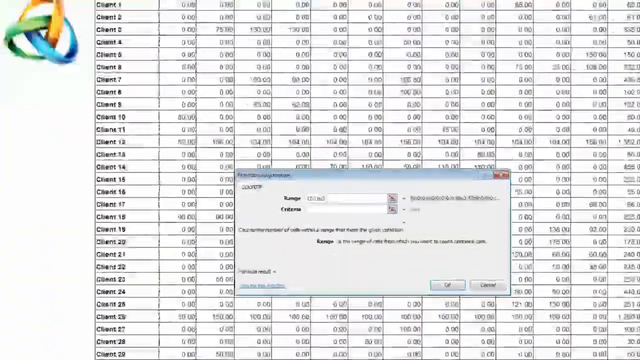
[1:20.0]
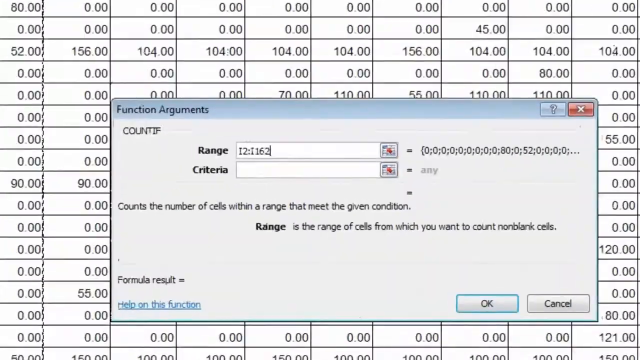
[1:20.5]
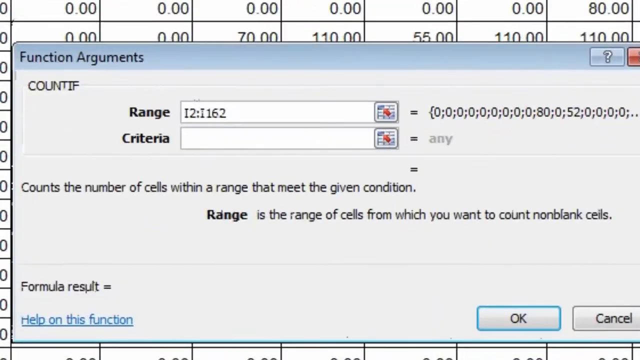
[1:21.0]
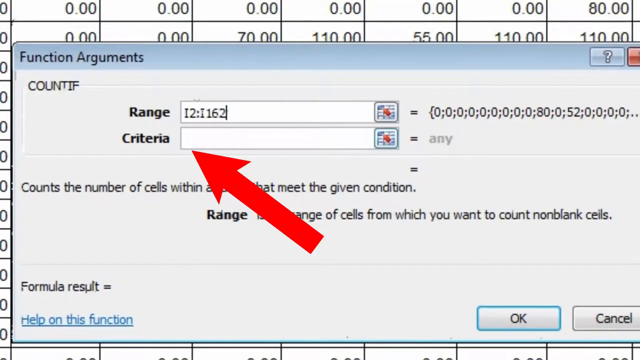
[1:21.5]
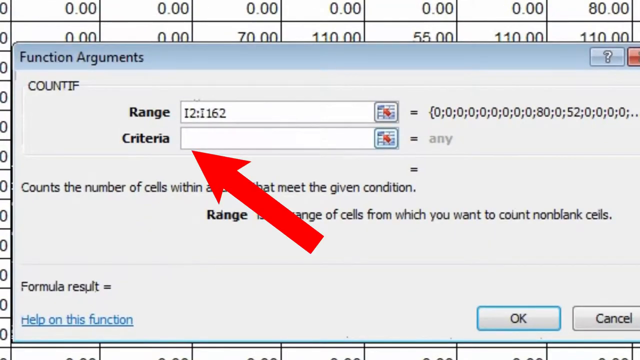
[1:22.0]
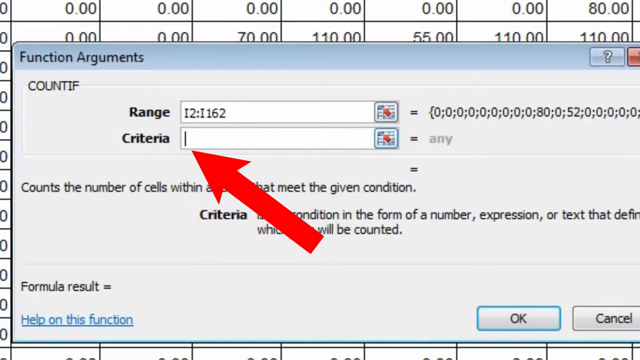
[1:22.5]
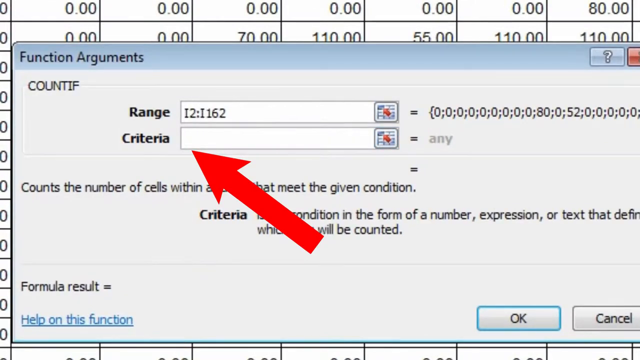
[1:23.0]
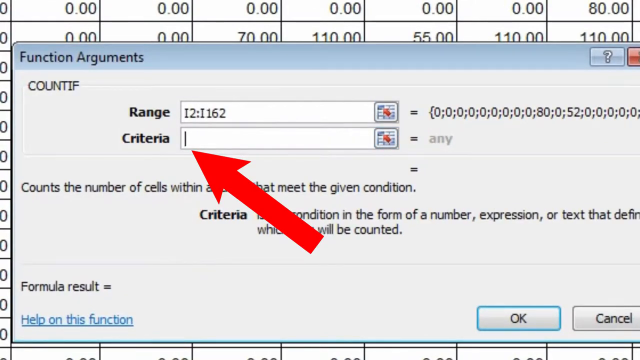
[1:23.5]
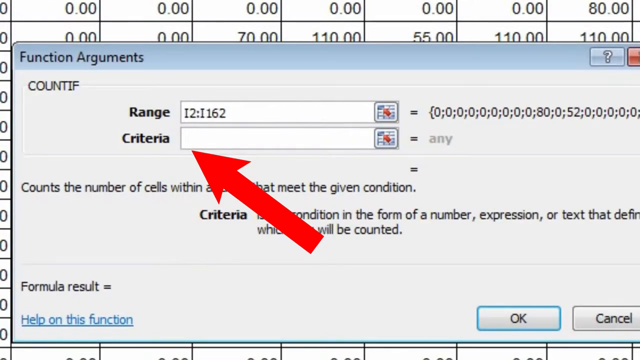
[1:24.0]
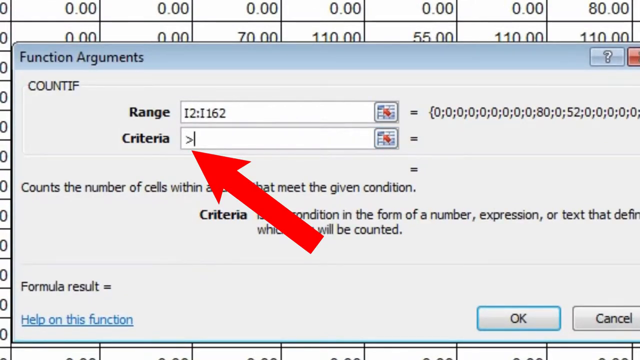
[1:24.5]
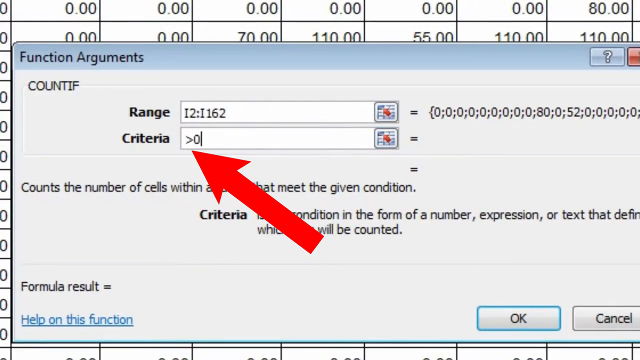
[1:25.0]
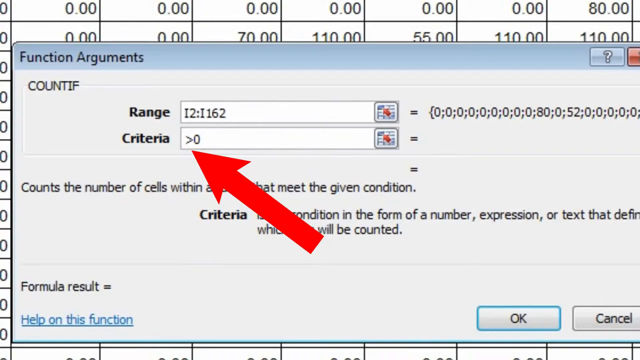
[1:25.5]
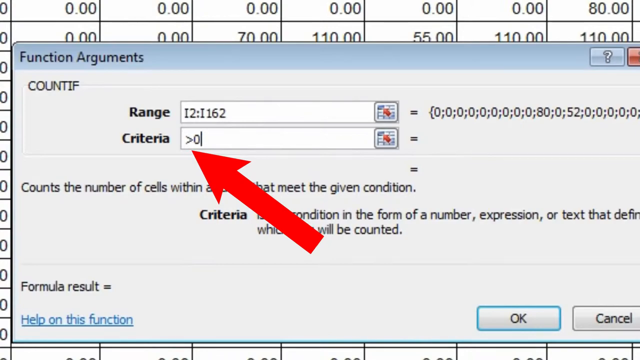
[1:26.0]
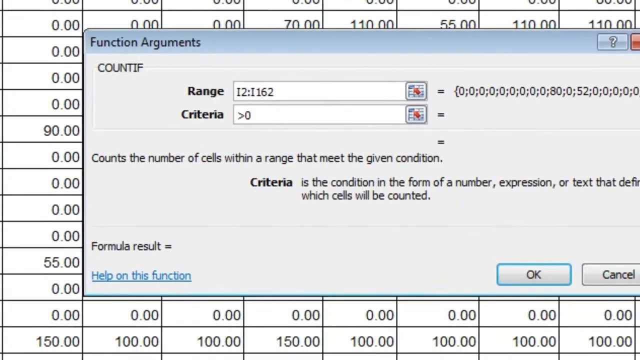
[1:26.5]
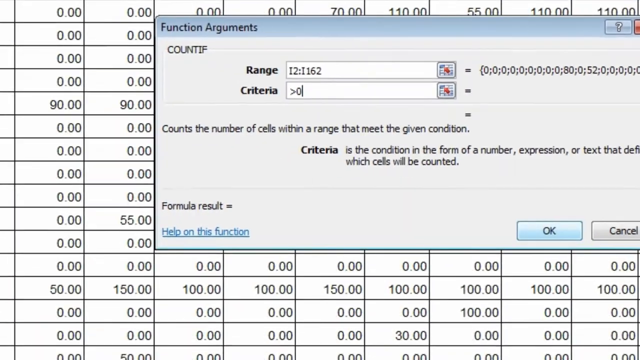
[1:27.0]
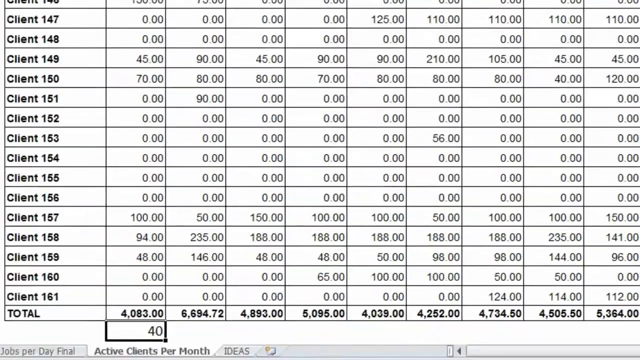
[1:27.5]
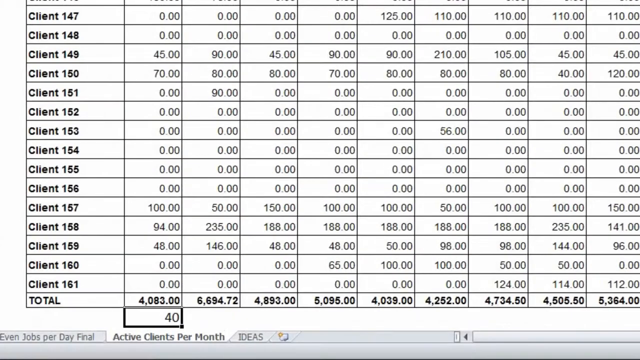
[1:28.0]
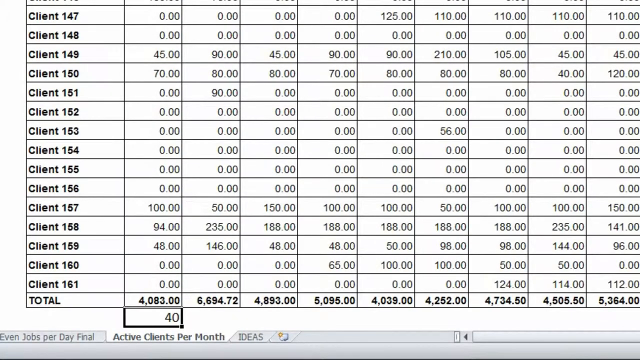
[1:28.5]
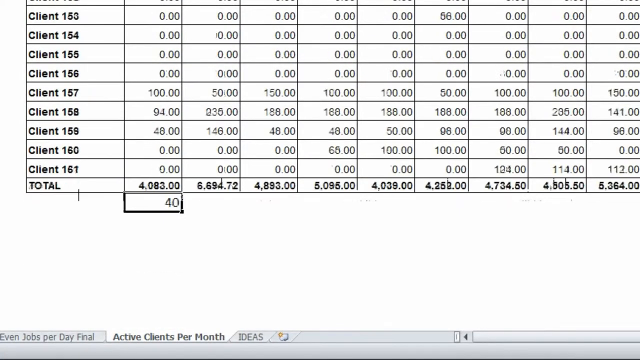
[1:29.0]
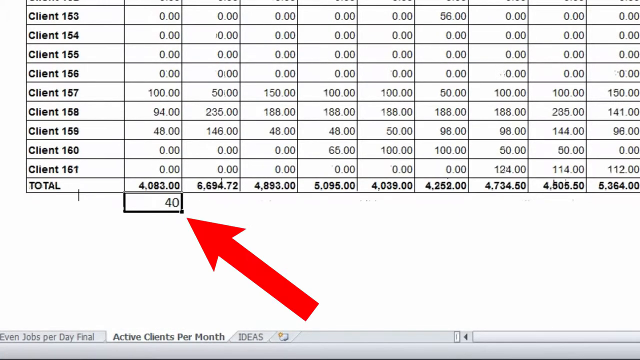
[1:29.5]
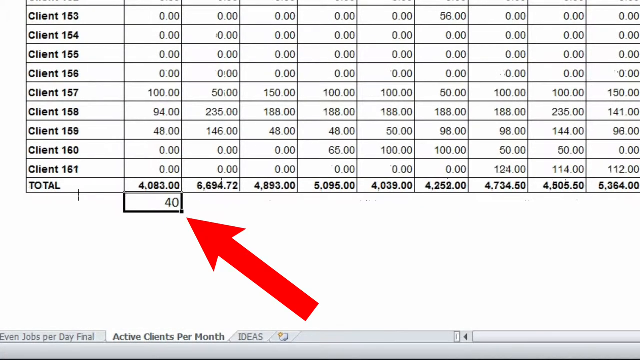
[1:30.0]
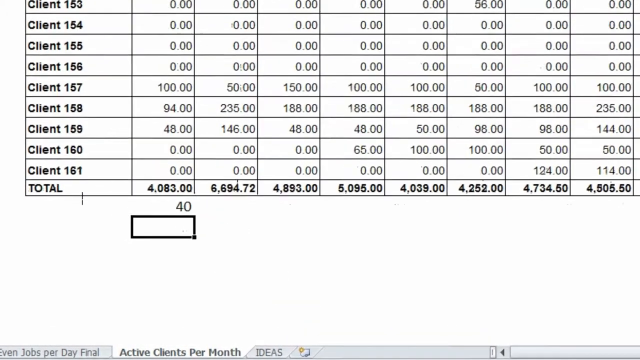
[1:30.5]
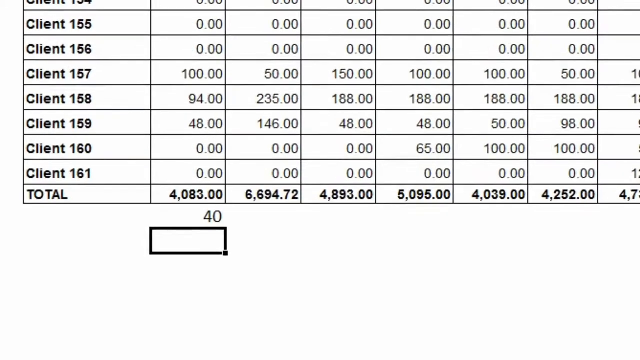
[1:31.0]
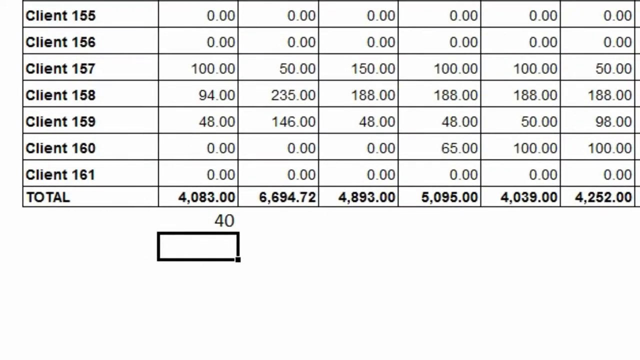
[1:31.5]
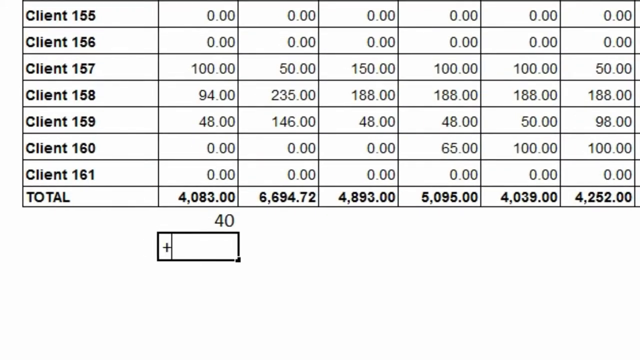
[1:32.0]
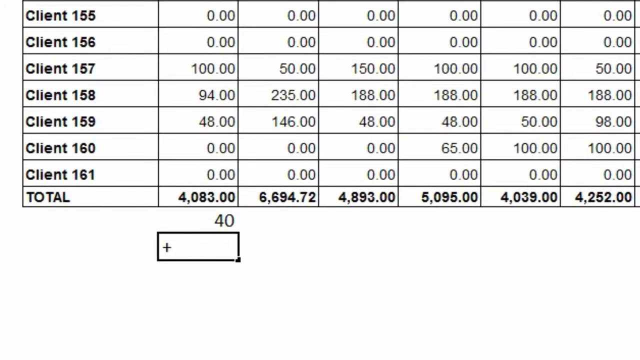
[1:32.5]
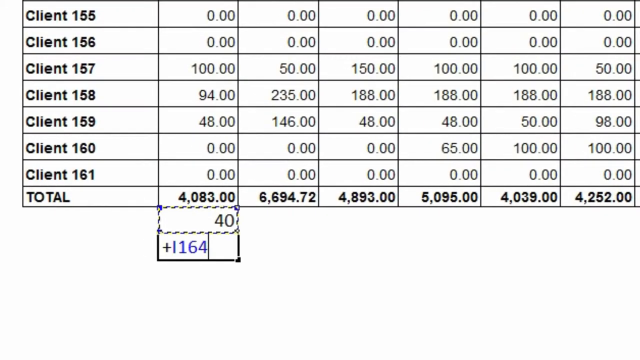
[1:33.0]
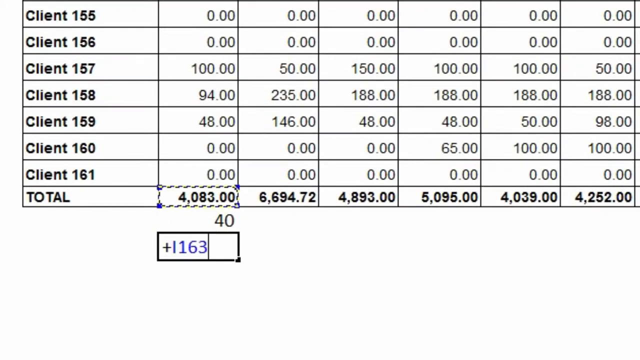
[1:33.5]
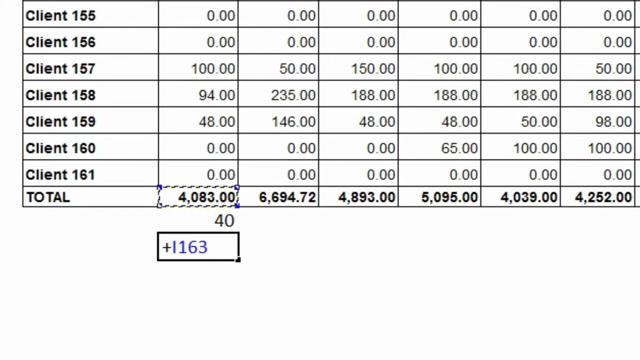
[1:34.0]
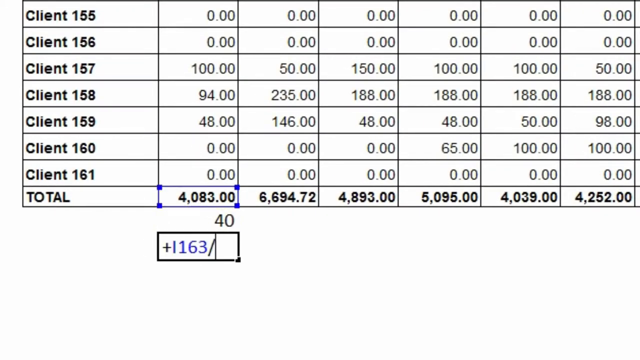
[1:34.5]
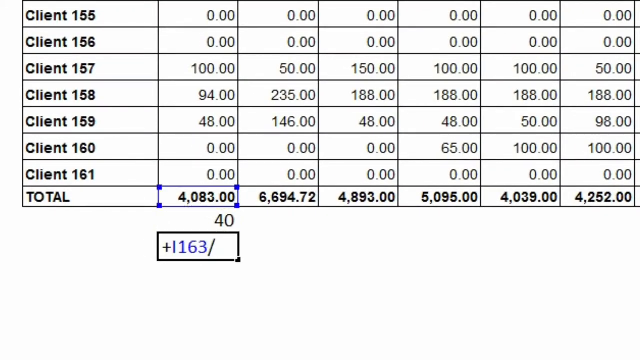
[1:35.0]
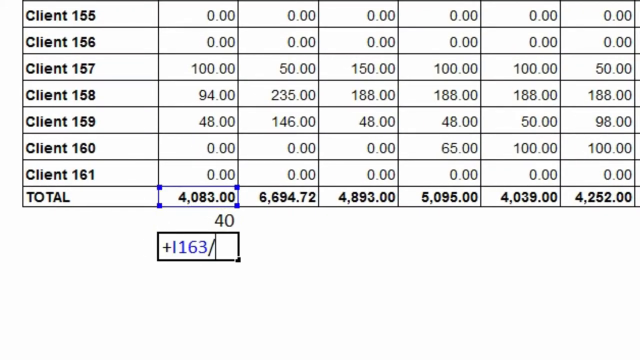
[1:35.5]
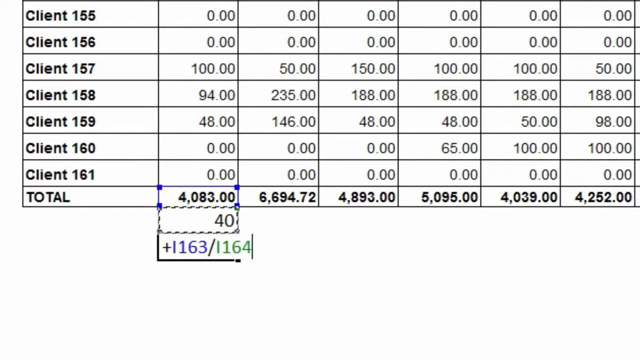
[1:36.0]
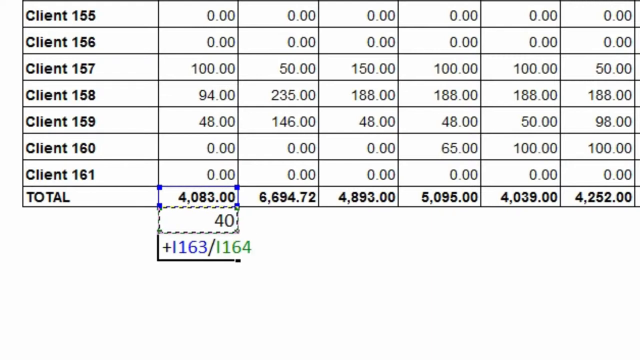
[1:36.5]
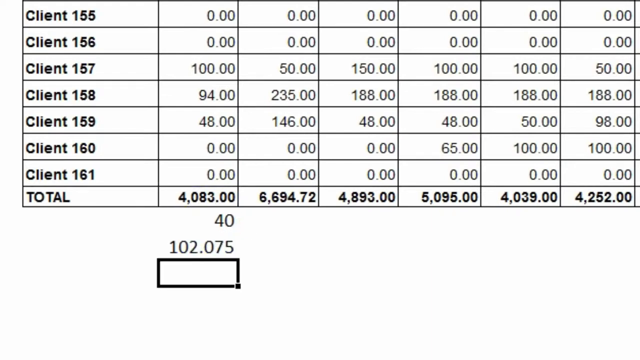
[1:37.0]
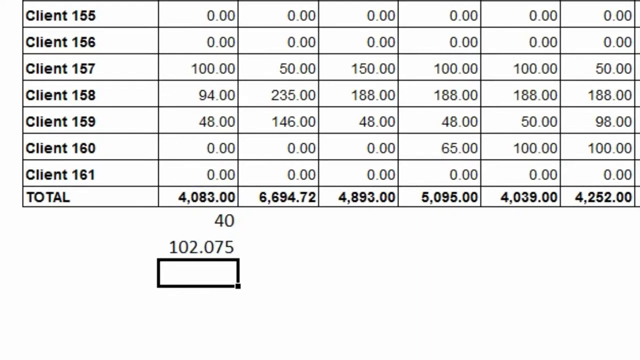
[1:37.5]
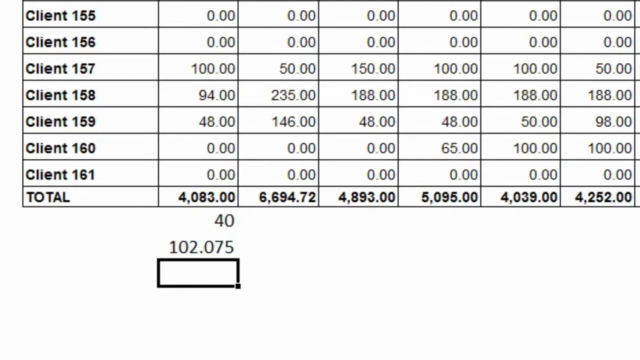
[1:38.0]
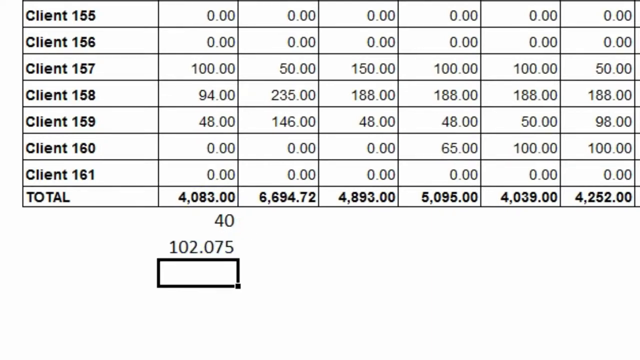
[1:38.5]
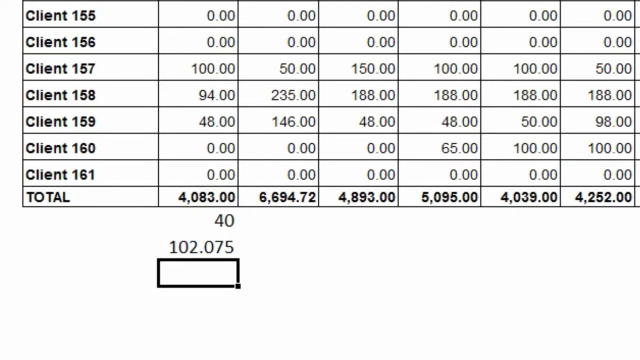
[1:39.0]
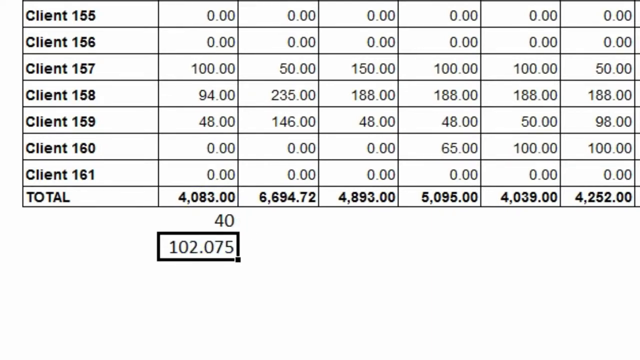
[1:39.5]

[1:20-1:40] The spreadsheet, titled "Active Clients by Month" and apparently for a cleaning business, runs from Client 1 to 161 across 12 months with amounts per month. Most clients do not have monthly cleaning; some start only in October, and a few are billed every month. A window labeled "Function Arguments" is open for CONTIF, with Range and Criteria fields. The person types numbers into Range, and a big red arrow points to the fields. They enter greater than zero for the criteria, then go to the bottom of the January column, where it shows "163/164," and then the figure changes to 40 and then about $102; it is unclear whether these are money or time.